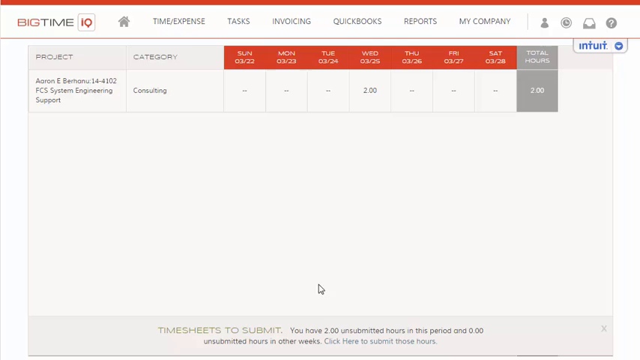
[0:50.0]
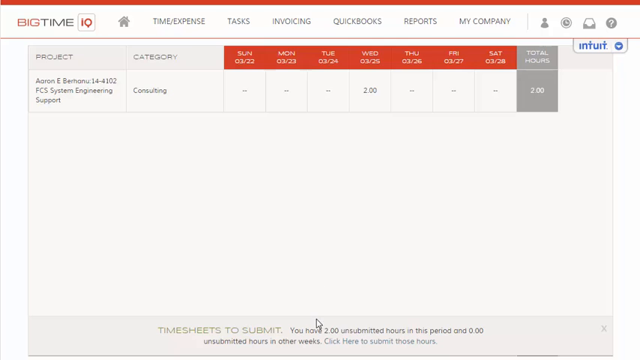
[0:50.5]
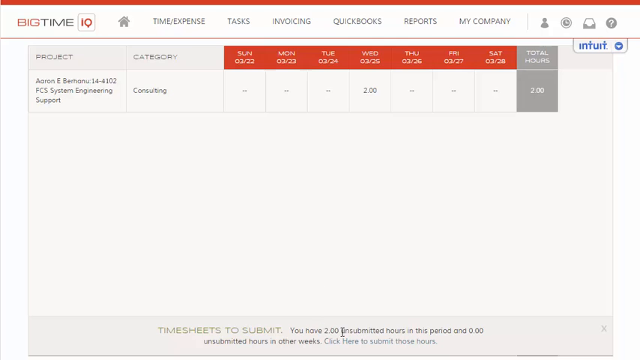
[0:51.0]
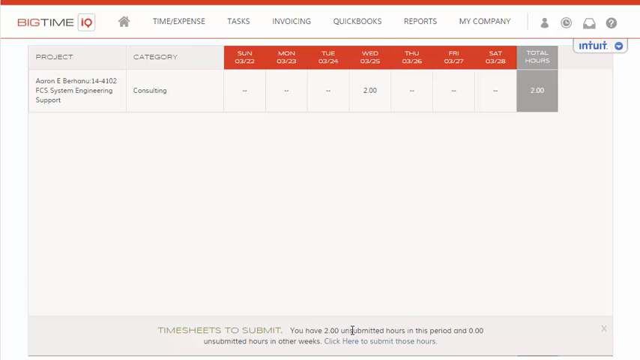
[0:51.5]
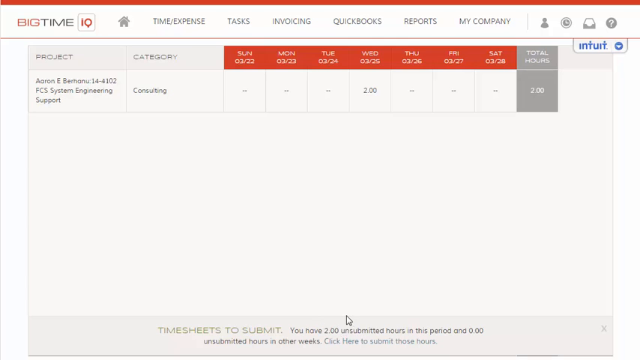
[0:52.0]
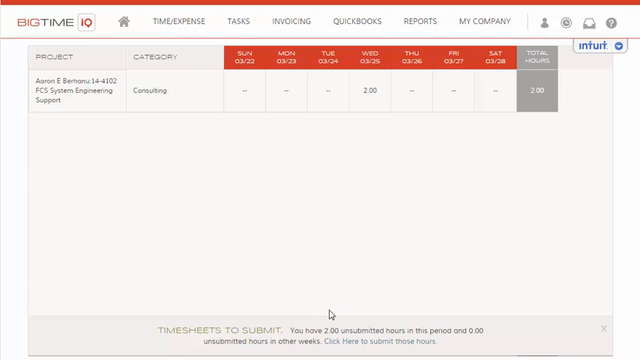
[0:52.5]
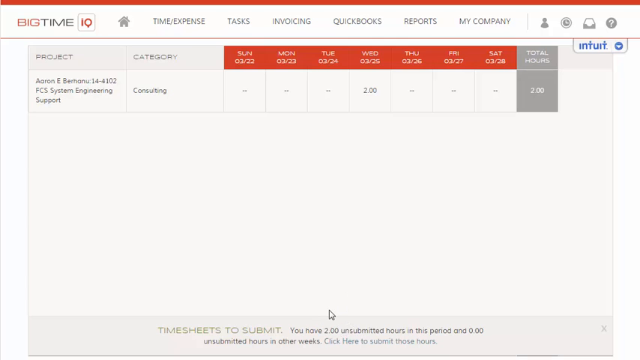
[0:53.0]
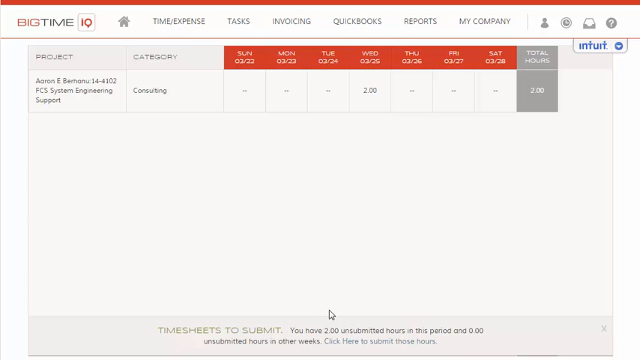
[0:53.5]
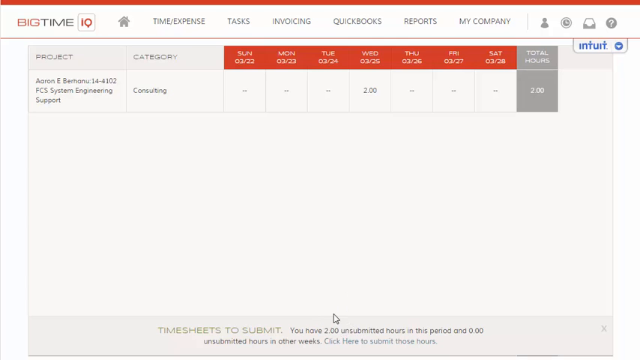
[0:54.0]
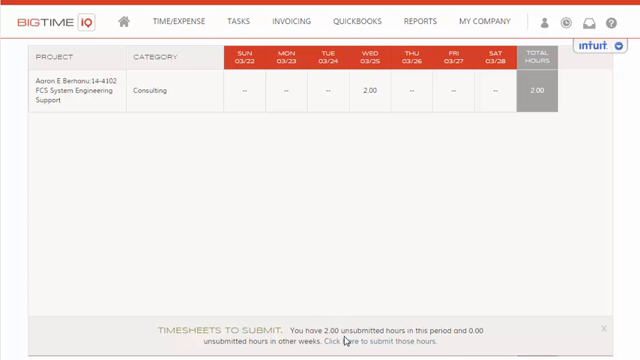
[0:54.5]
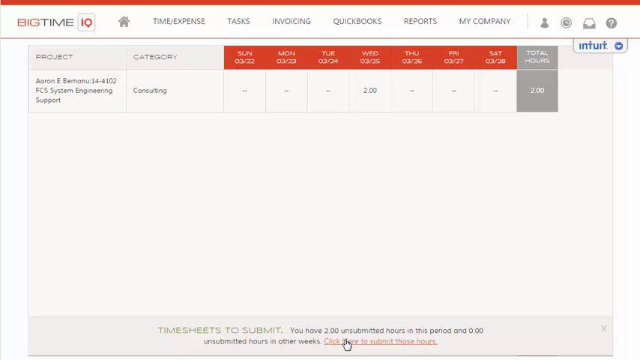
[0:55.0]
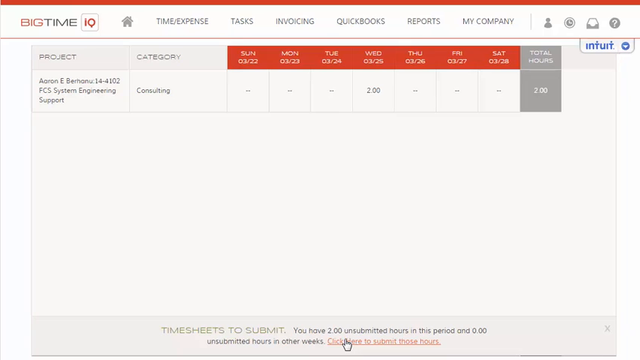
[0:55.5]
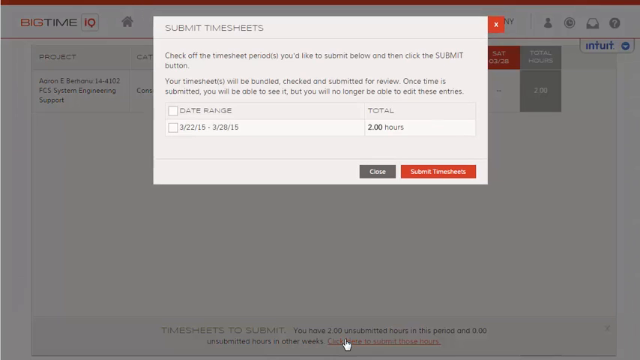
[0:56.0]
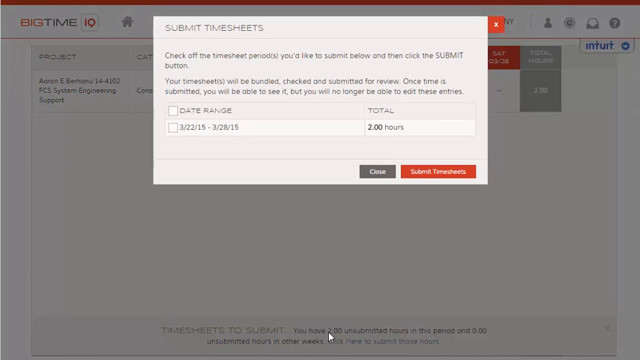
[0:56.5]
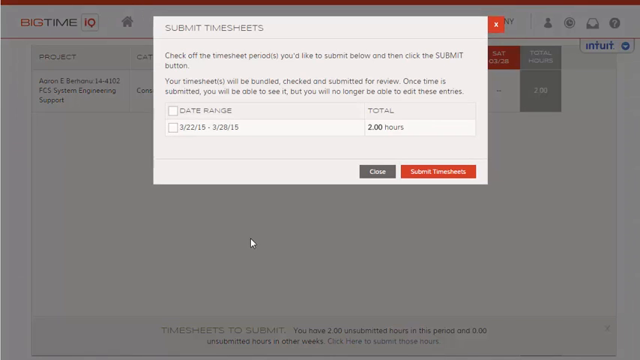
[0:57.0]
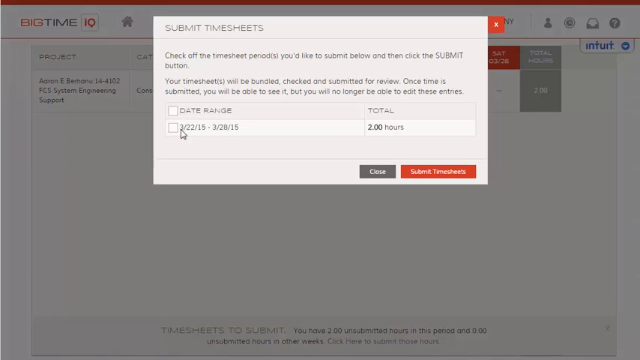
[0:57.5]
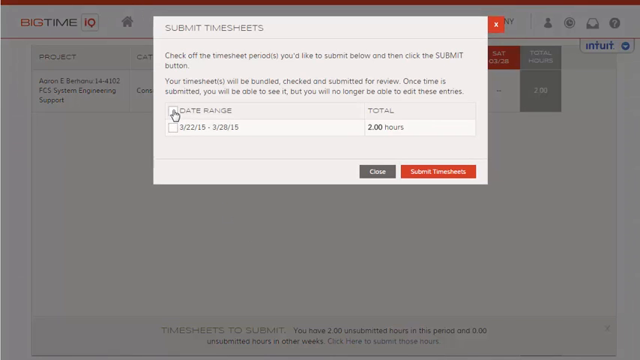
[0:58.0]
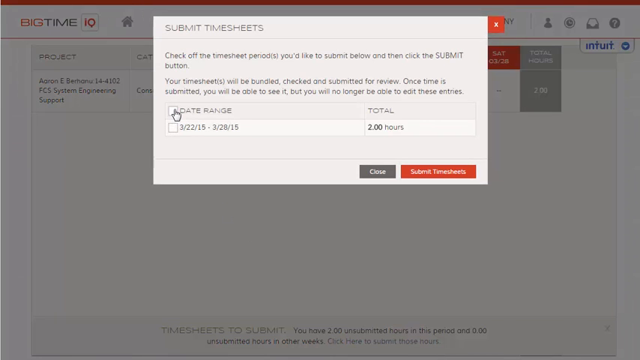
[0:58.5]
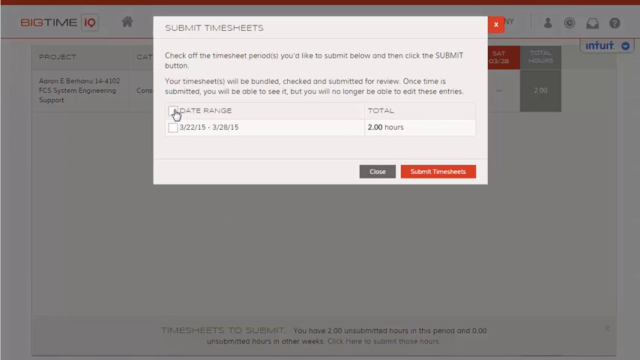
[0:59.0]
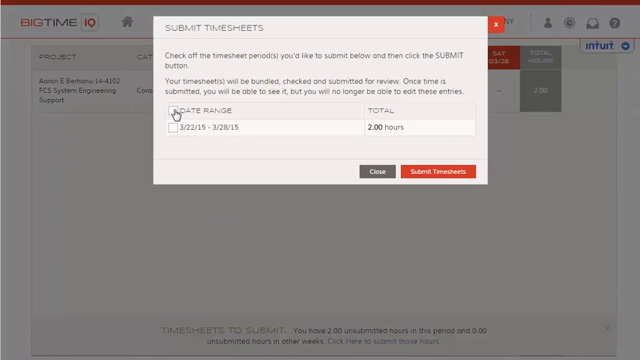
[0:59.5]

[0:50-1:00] The time expense page is up, showing the project "Erin E. Benthal 14-14102, FCS system engineering support" and the category consulting. The dates along the top run from Sunday to Saturday, 322 to 328. Every box has a dash except Wednesday, which shows 2.0, and the gray total hours box reads 2.0. A pop-up appears titled "submit timesheets," reading "Check off the timesheet period you would like to submit below and then click the submit button. Your timesheet will be bundled, checked and submitted for review. Once time is submitted, you will be able to see it, but you will no longer be able to edit these entries." It has a checkbox for date ranges, listing the date range 322.15 to 328.15 with a total of two hours. There is a close button and a red "submit transaction" button.